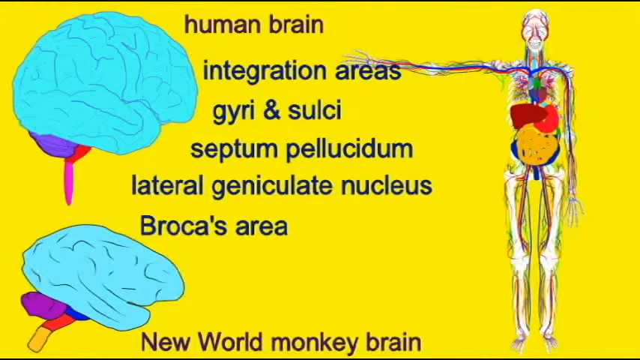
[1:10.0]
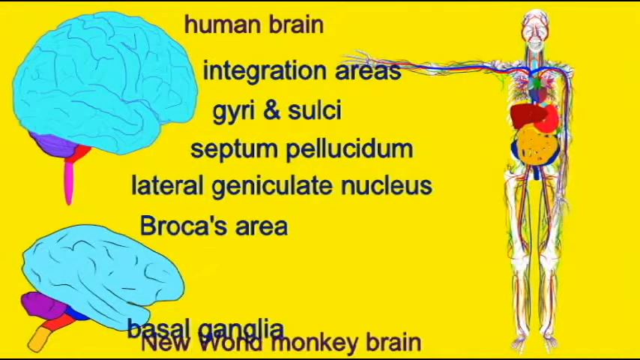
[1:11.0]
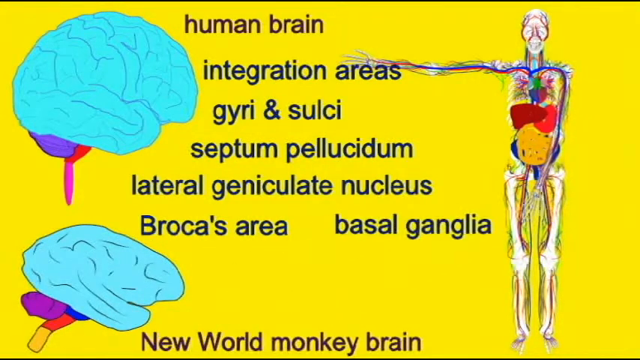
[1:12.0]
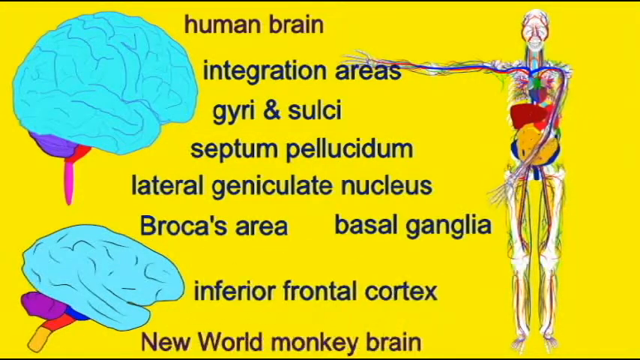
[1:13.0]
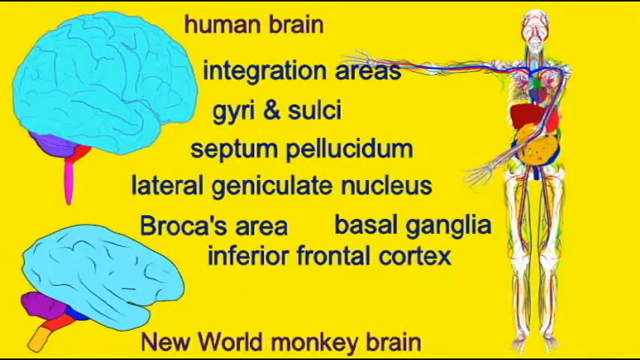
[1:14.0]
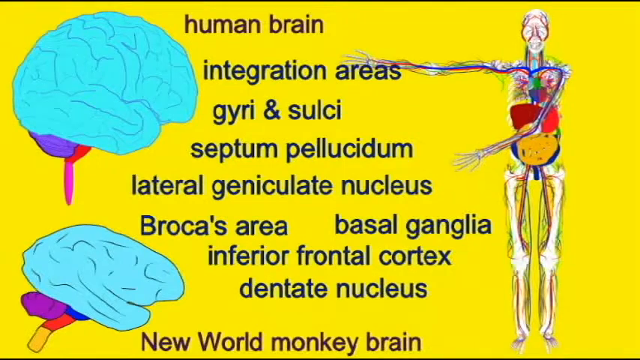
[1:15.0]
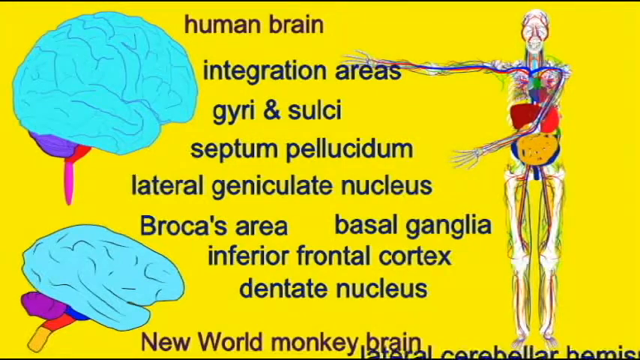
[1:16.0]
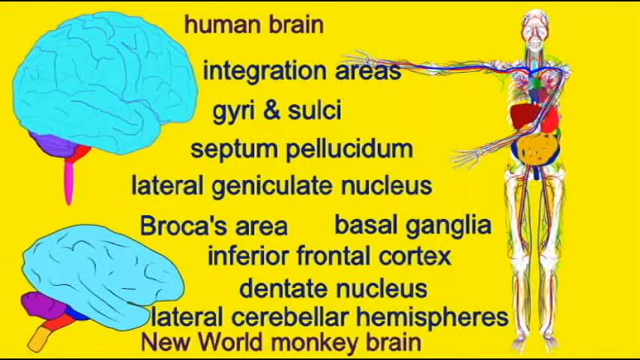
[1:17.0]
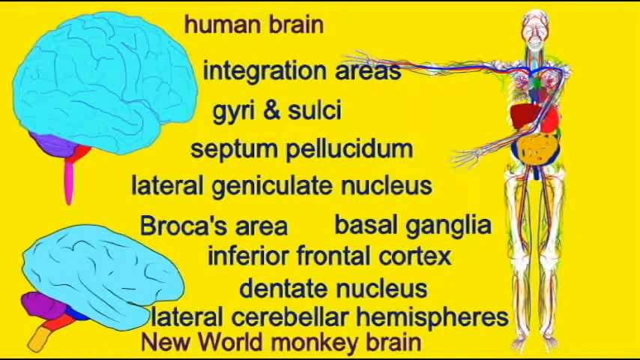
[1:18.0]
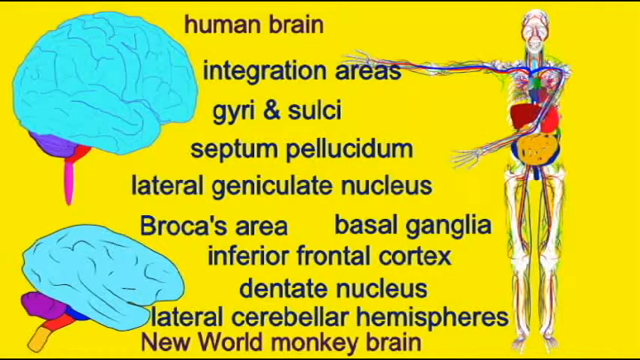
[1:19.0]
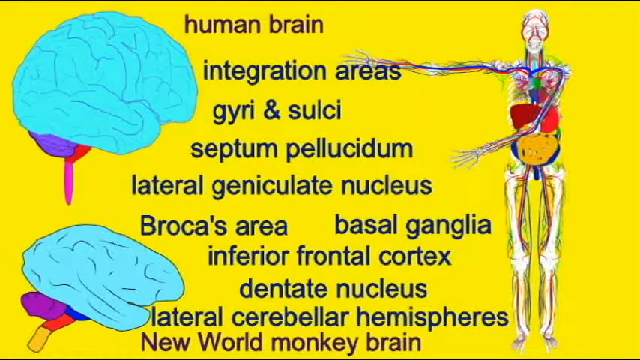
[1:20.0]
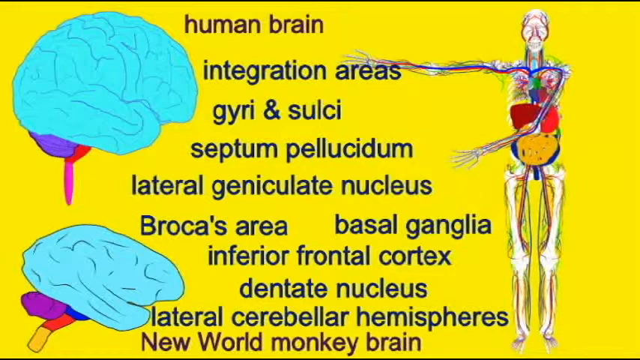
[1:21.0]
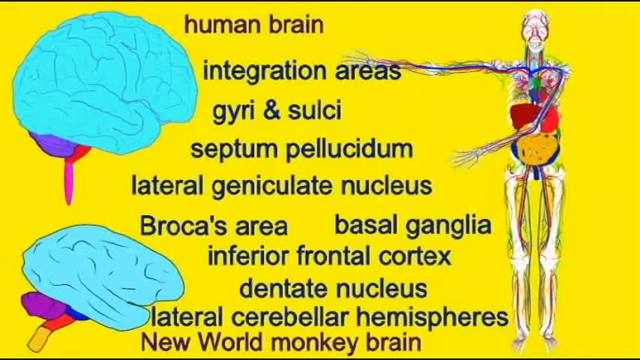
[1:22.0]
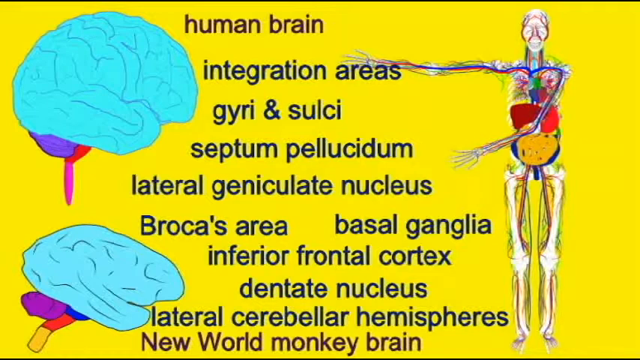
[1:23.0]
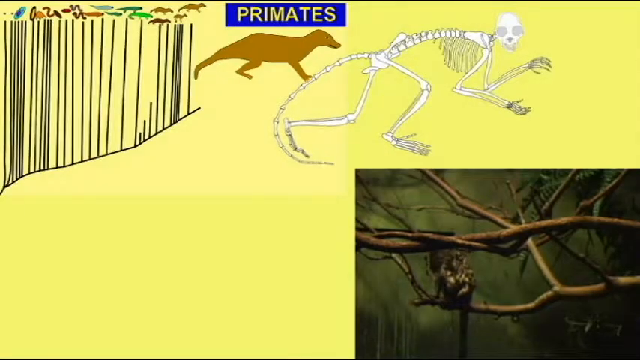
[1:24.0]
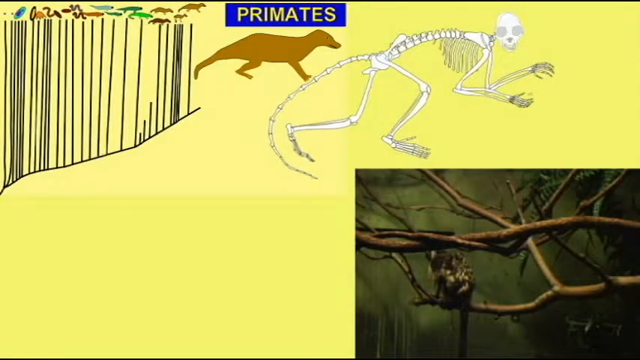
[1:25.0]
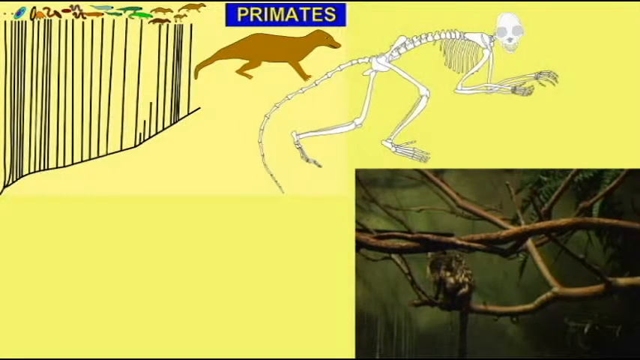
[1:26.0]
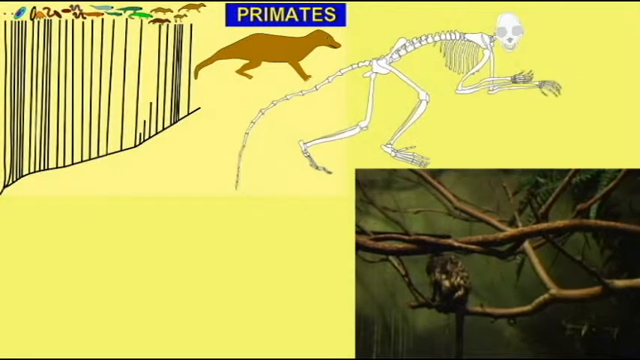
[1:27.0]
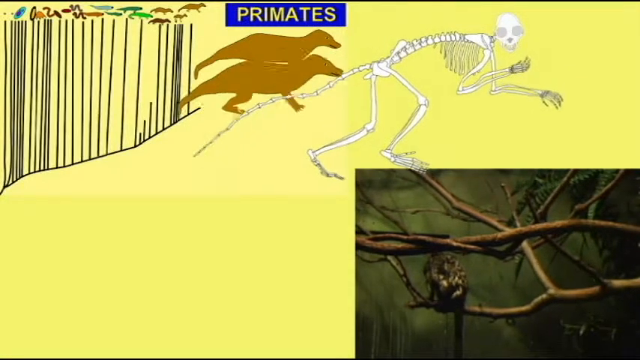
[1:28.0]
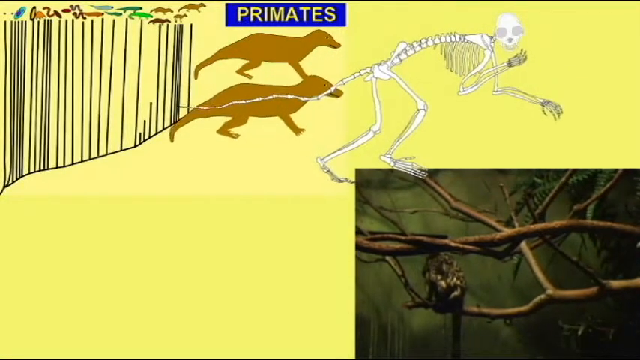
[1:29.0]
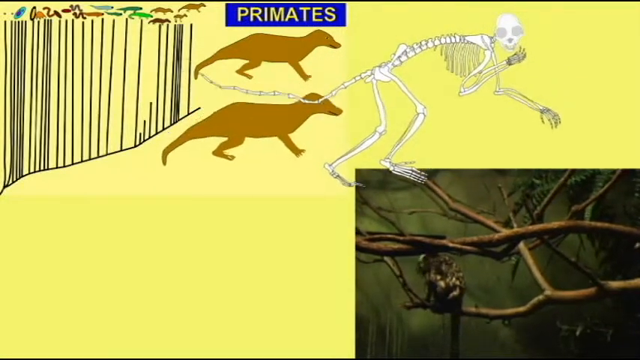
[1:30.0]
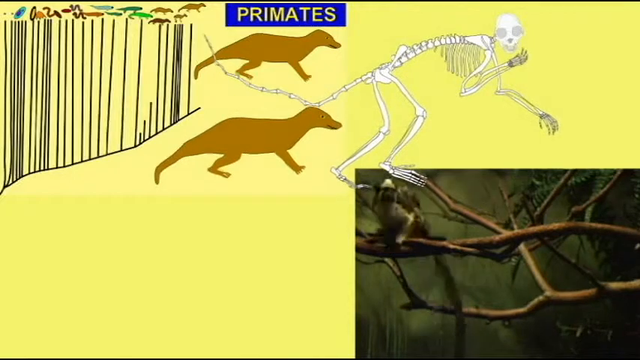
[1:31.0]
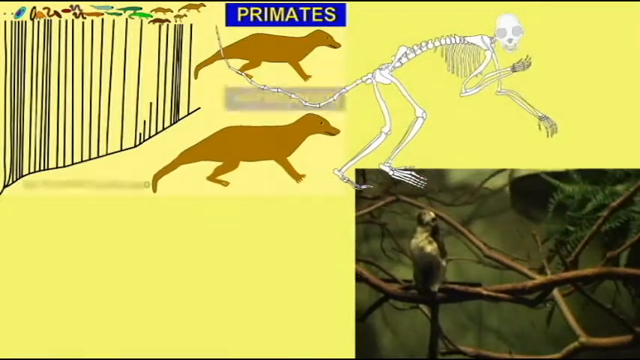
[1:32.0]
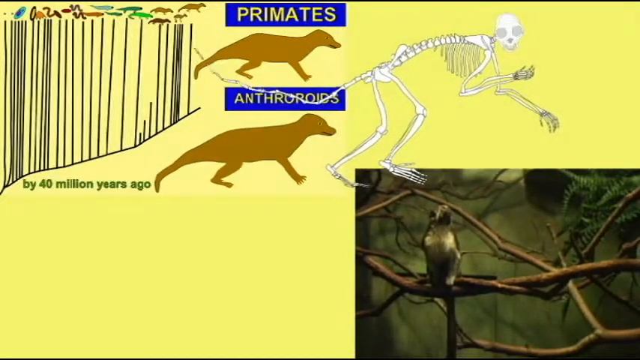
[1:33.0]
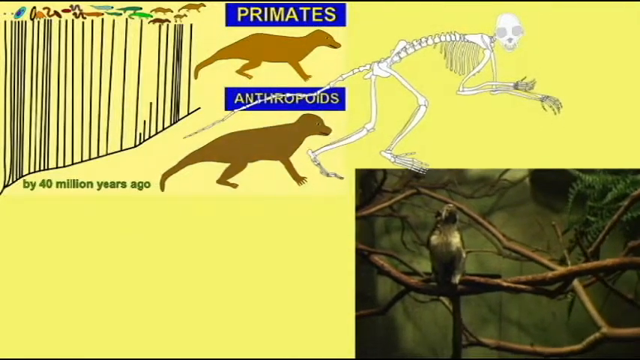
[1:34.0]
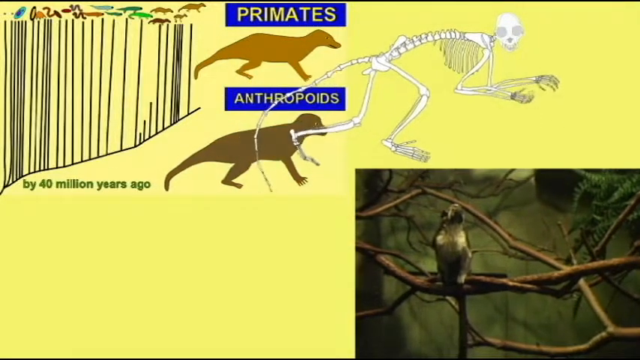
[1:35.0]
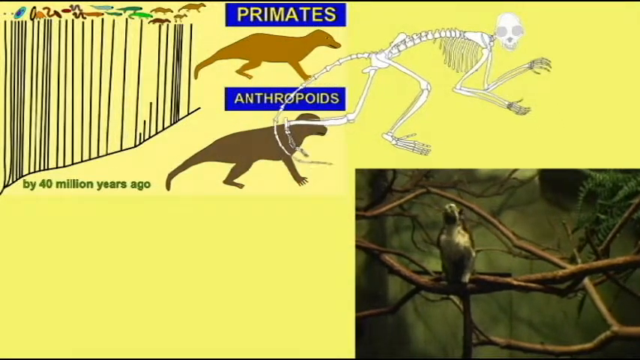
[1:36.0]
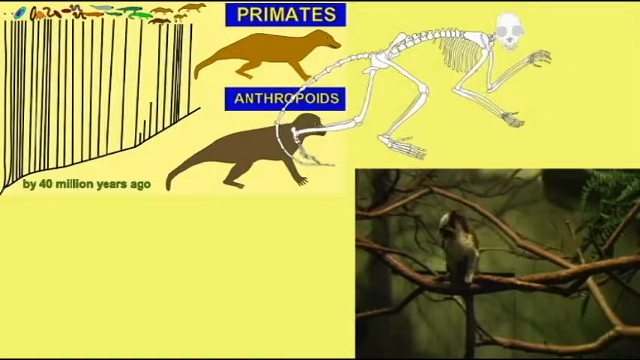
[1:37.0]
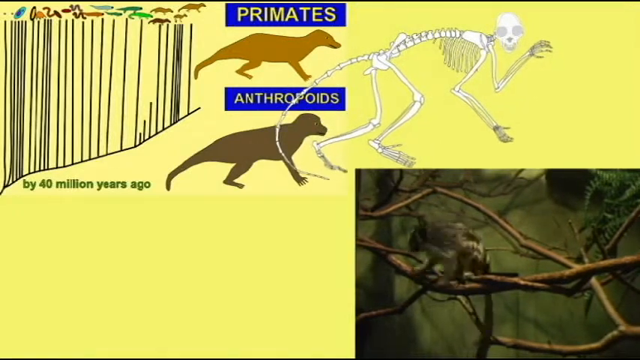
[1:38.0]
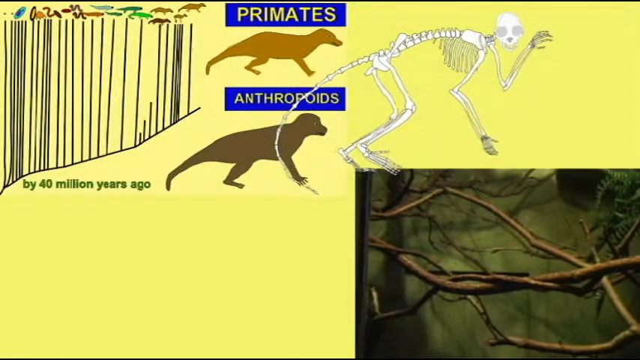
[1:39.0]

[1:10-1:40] The skeletal figure on the right-hand side of the screen continues to move its arms up and down and move its jaw as if talking to the viewer. Much more text takes shape across the slide, appearing in the middle of the screen until it completely fills the space between the two brains and the skeletal figure. The video then transitions to a darker yellow screen showing the same skeletal figure from earlier moving up and down, an image of a monkey in a tree at the bottom right, and at the top left a gate-like design with animals drawn around it reading "primates." The primates then duplicate into two, the monkey at the bottom right begins to move around, and text appears next to the primates on the left reading "by 40 million years ago."